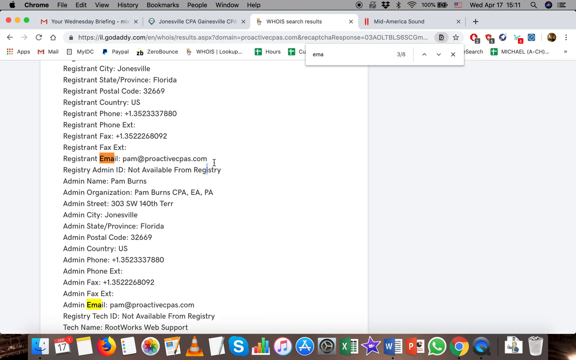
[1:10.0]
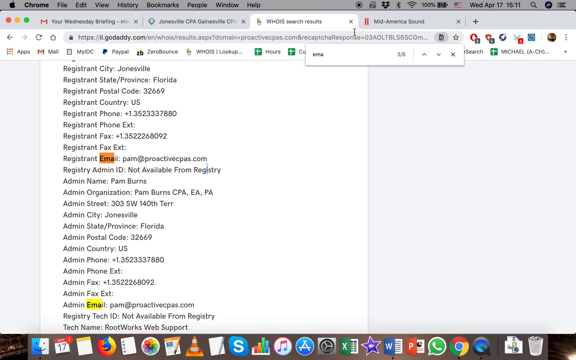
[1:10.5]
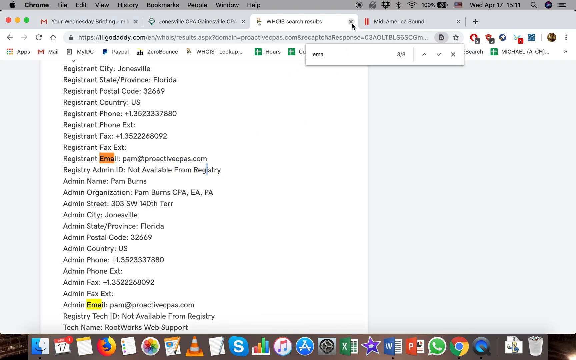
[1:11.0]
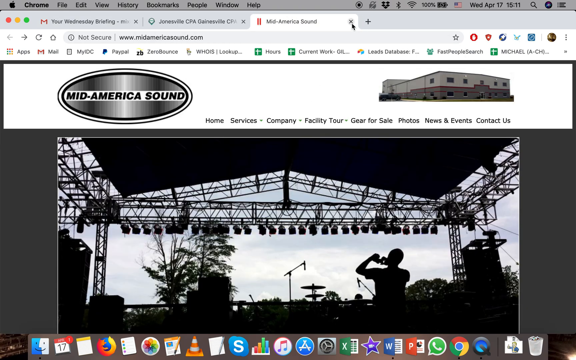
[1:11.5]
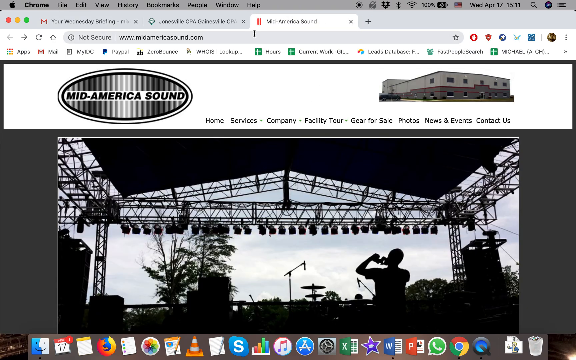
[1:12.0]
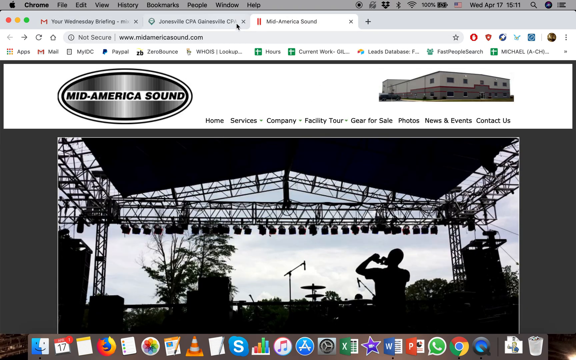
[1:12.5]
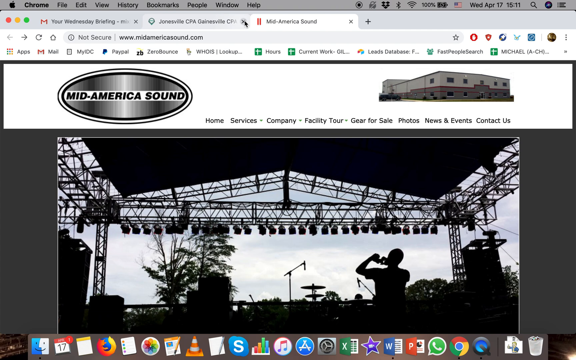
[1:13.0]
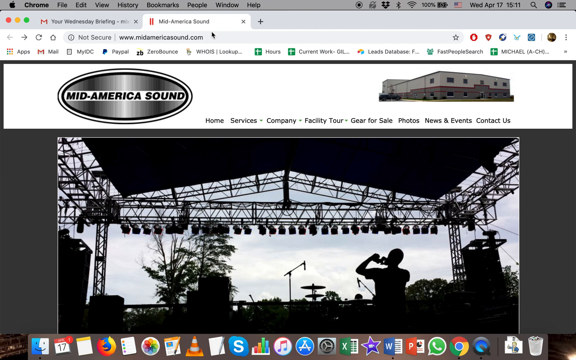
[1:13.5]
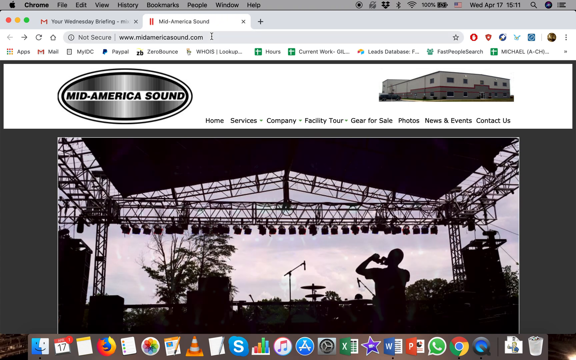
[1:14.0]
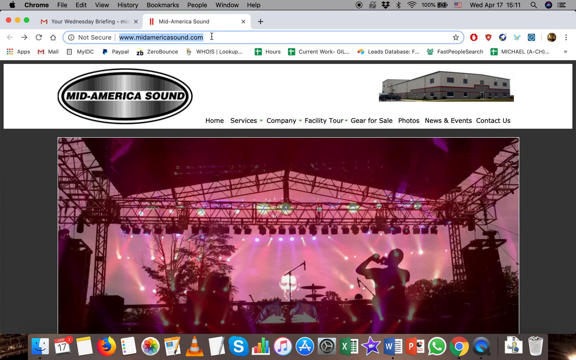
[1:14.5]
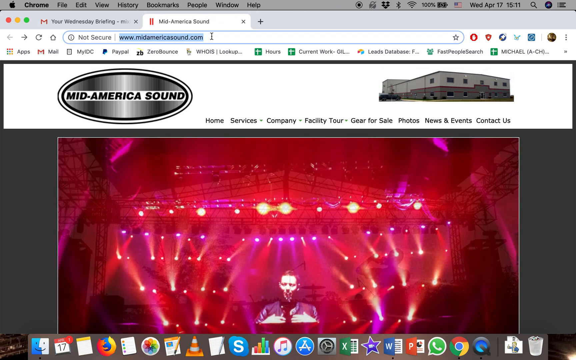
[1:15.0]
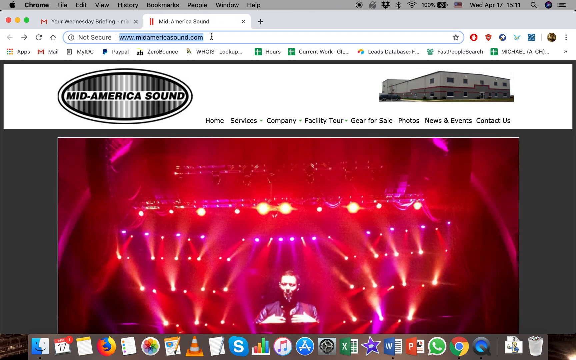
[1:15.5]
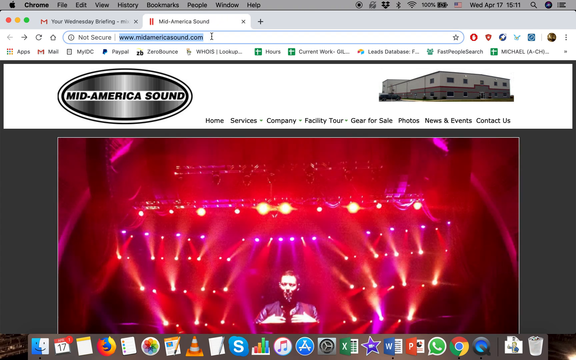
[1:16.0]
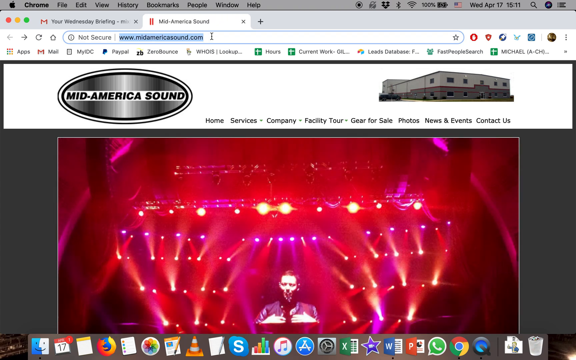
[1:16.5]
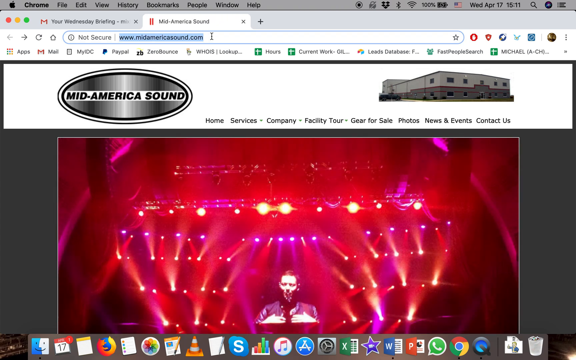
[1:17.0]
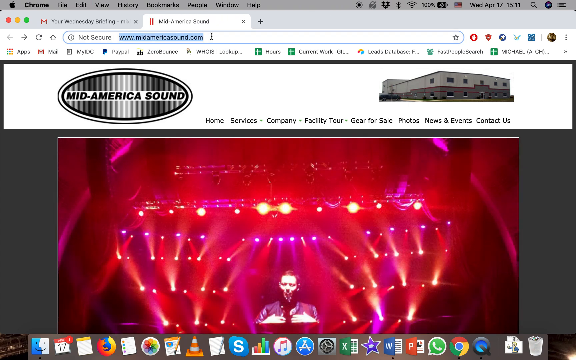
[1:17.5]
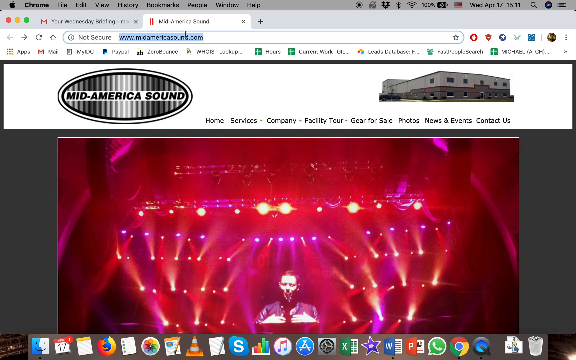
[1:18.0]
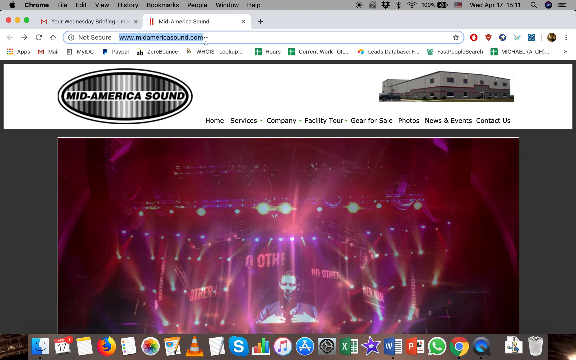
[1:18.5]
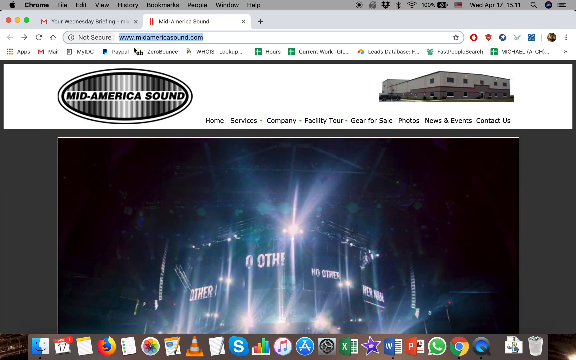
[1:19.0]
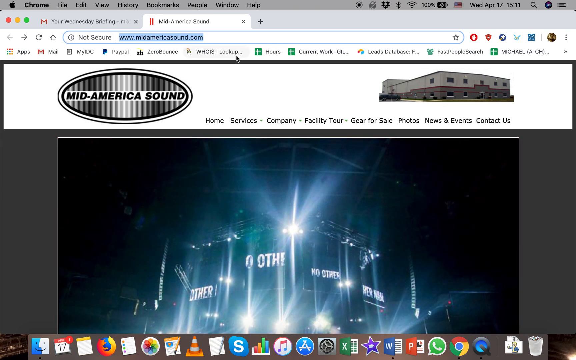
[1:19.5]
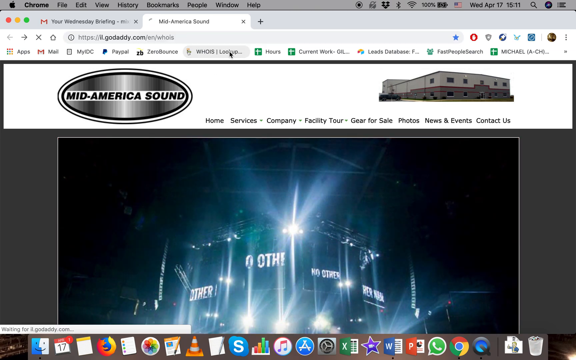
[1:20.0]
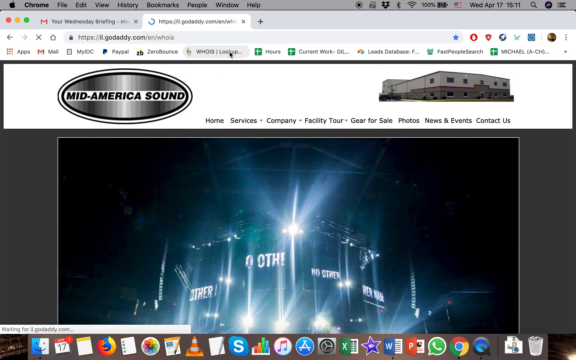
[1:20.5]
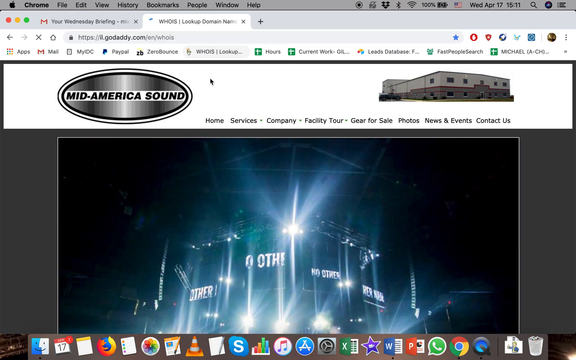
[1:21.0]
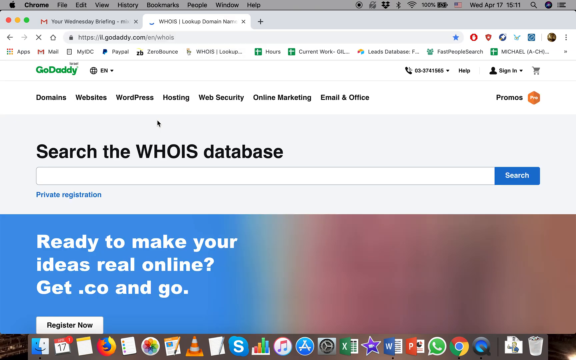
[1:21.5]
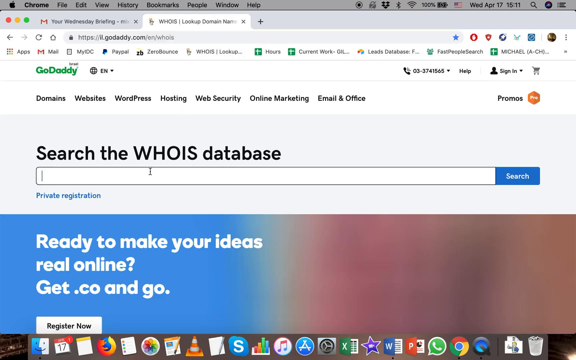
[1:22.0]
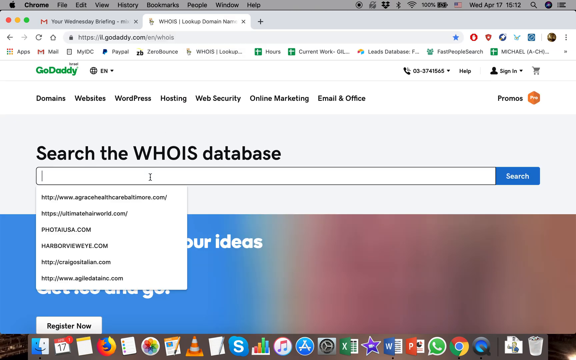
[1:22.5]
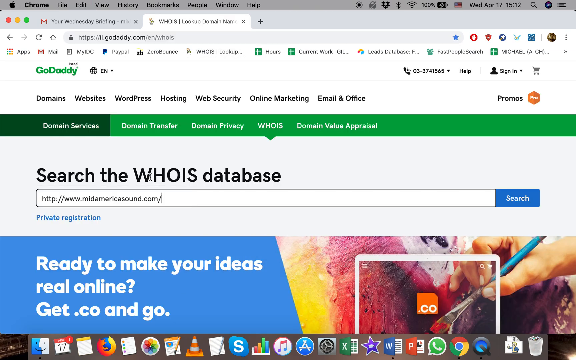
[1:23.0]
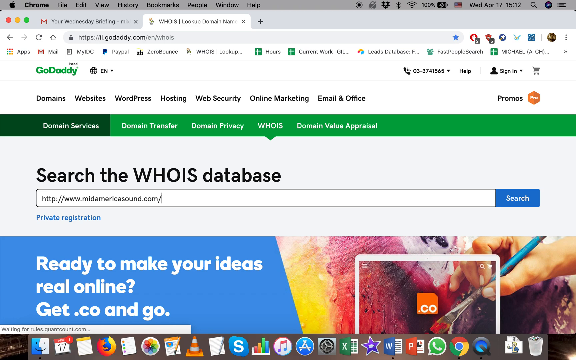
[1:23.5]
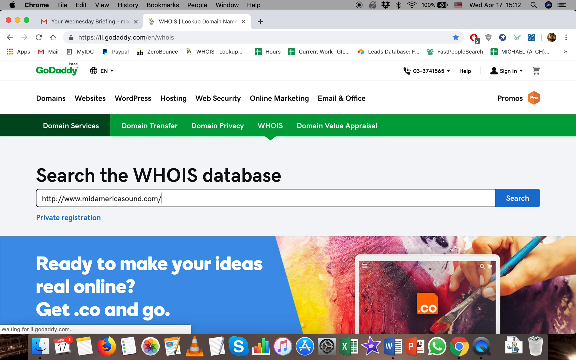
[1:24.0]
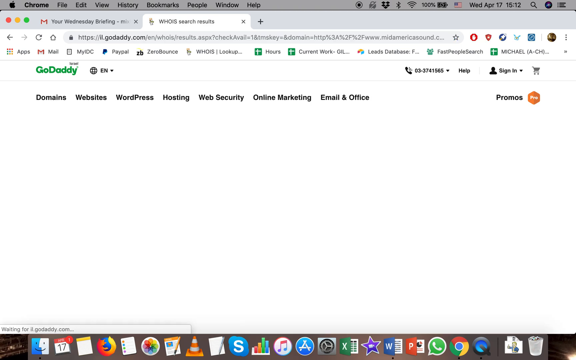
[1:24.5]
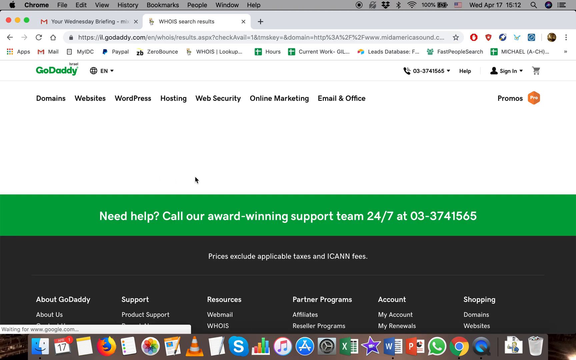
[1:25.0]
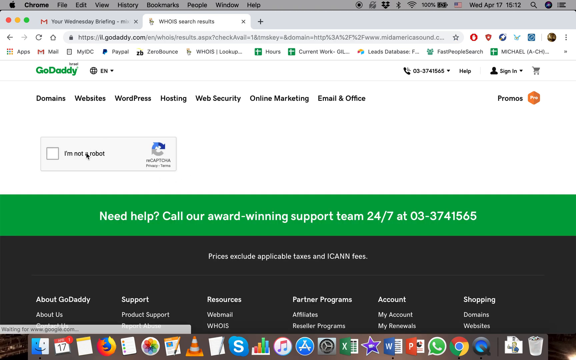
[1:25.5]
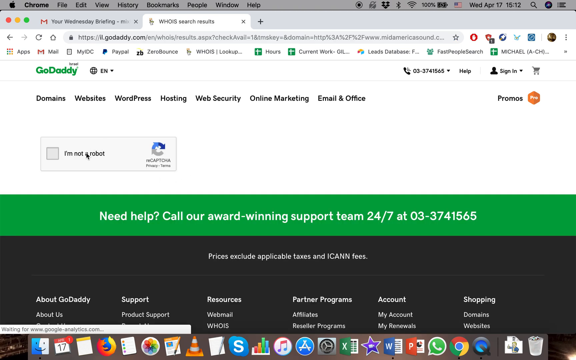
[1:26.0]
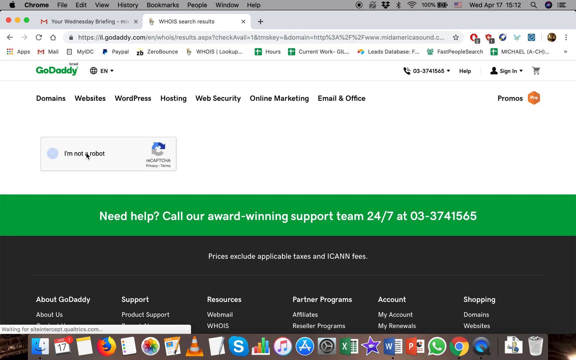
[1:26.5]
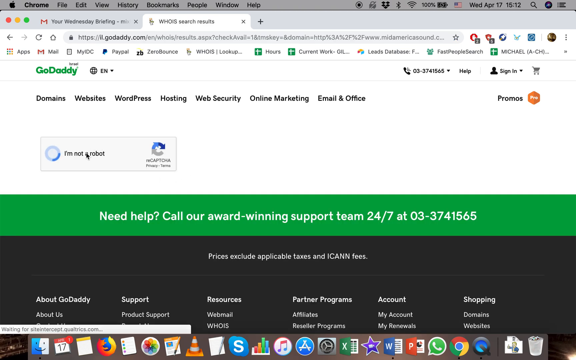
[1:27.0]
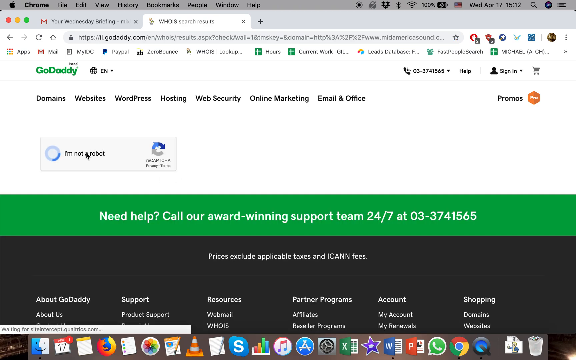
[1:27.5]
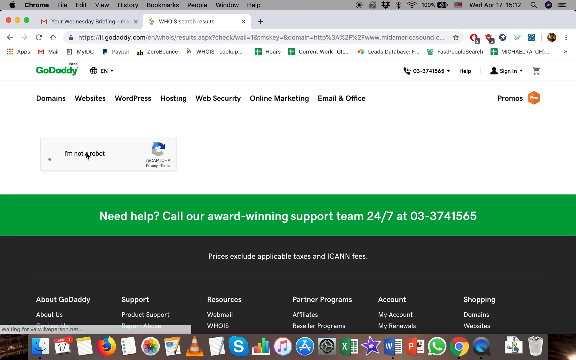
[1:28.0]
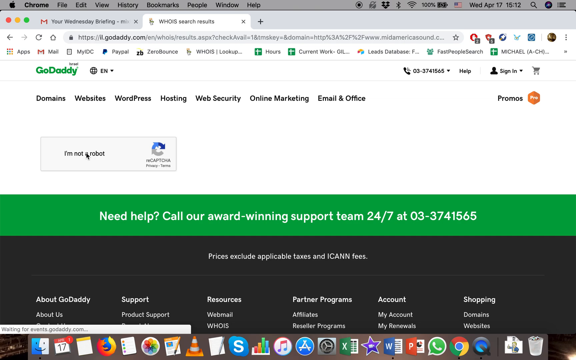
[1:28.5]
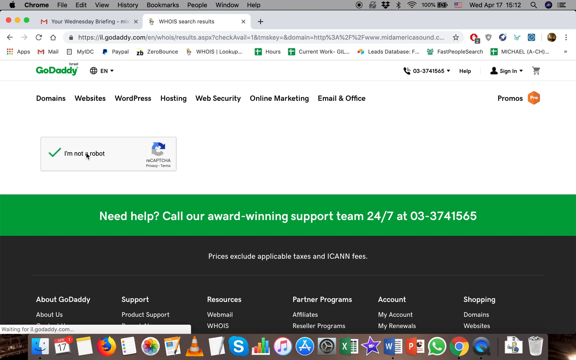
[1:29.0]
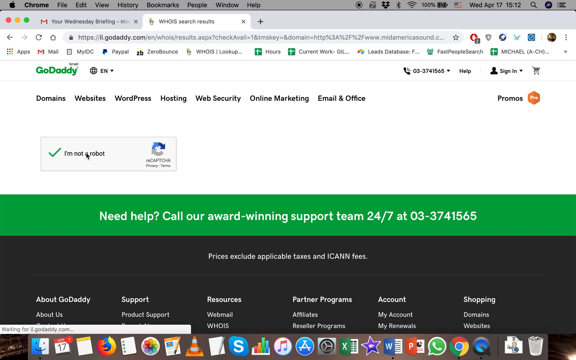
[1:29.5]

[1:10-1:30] The user has gone to a different website, midamericasound.com. It looks like a music hall, maybe, with a building in the top right corner and a menu at the top reading home, services, company, facility tour, gear for sale, photos, news and events, contact us. The image shows a man under a pavilion with a bunch of lights pointed at him; it is morning and the lights are off, so only his black outline is visible, sort of looking like he is taking a photo or making a sign at a bunch of instruments on stage. Two microphones, a bunch of drums, and what appears to be the handle of a guitar are visible. The user closes two tabs at the top: the Whois search results for the other site, and the CPA website. They highlight the Mid America Sound URL, apparently copying it, and paste it into the GoDaddy website. They then have to complete another verification that they are not a robot.